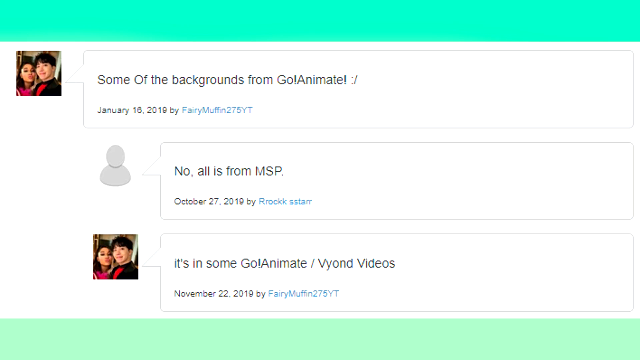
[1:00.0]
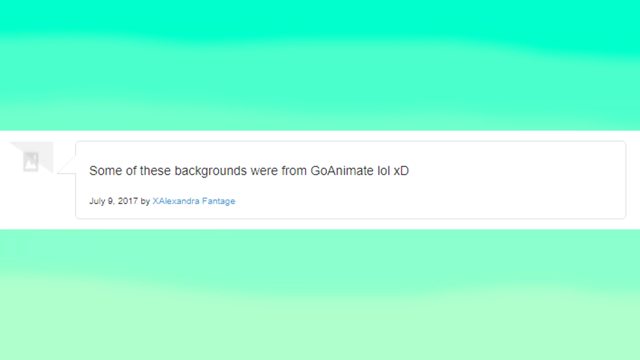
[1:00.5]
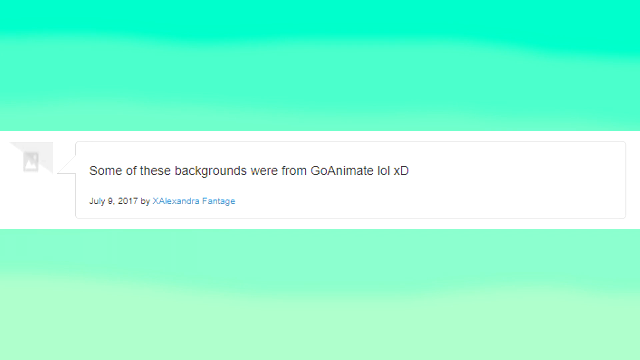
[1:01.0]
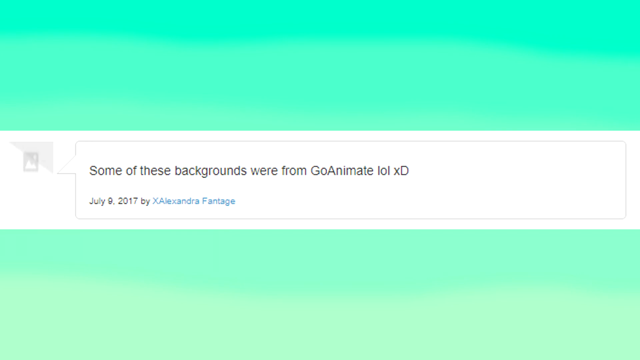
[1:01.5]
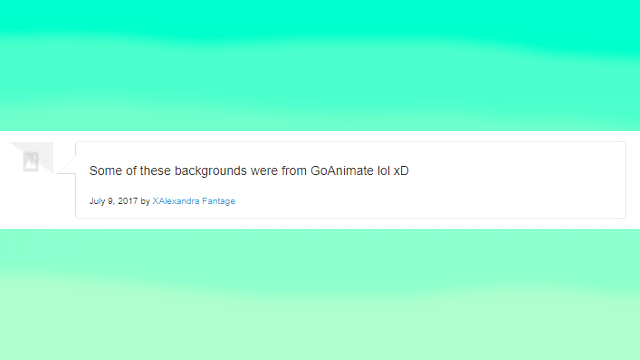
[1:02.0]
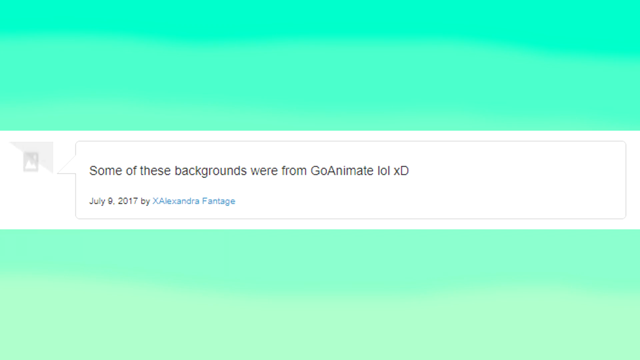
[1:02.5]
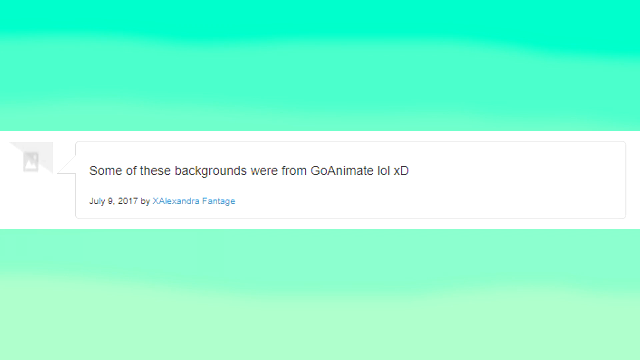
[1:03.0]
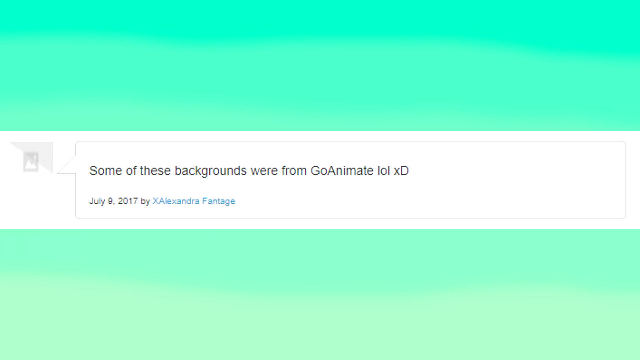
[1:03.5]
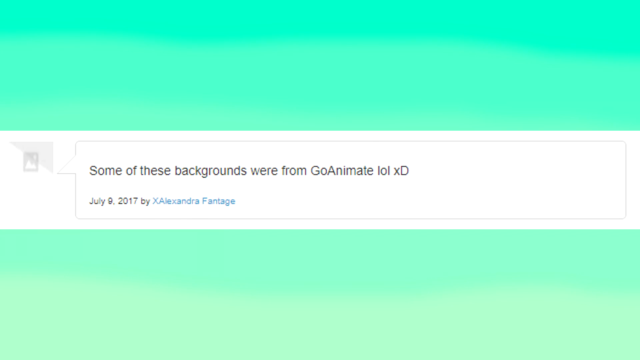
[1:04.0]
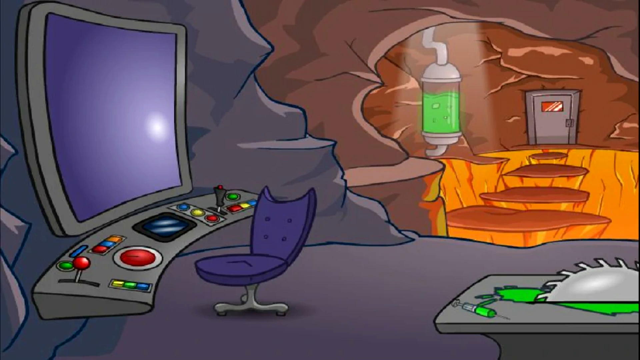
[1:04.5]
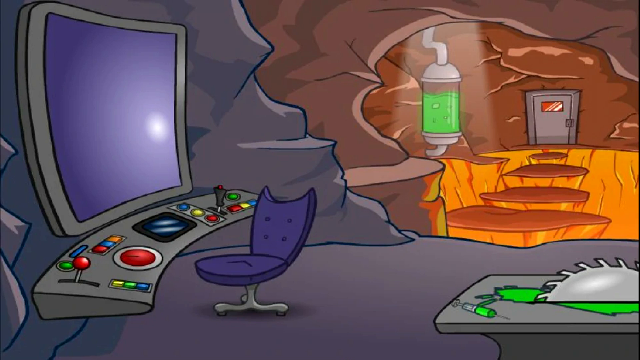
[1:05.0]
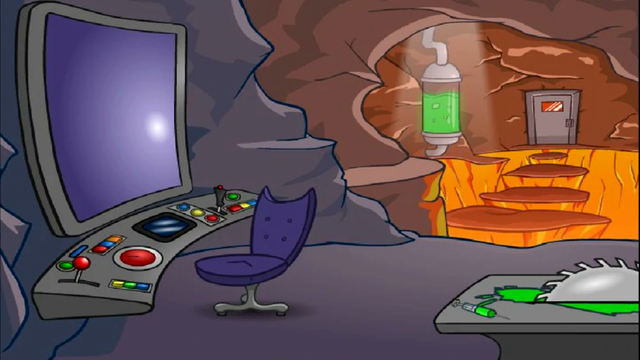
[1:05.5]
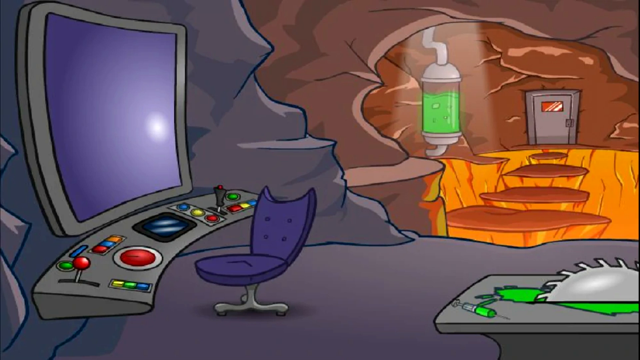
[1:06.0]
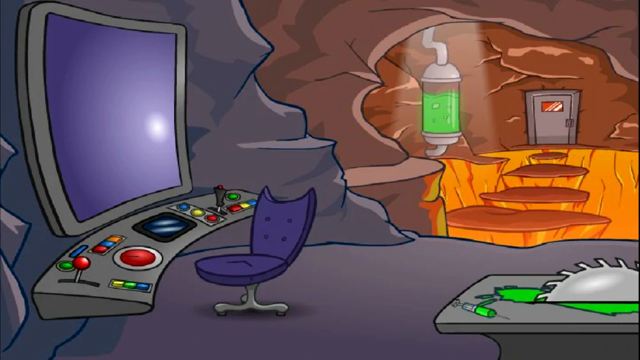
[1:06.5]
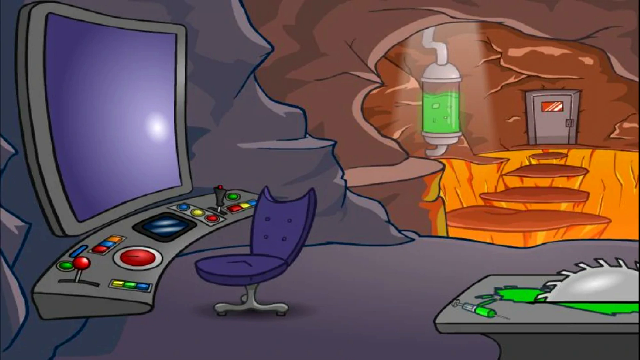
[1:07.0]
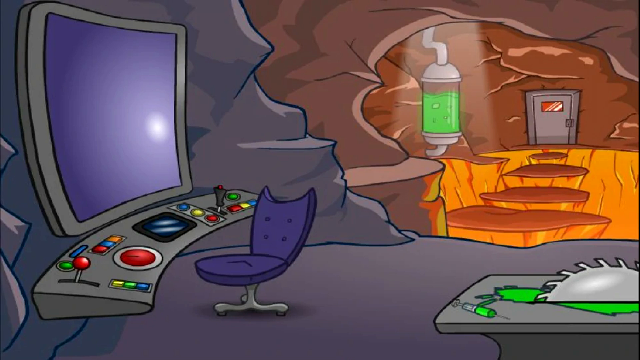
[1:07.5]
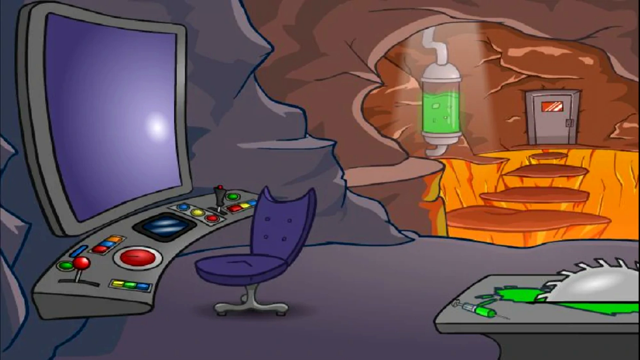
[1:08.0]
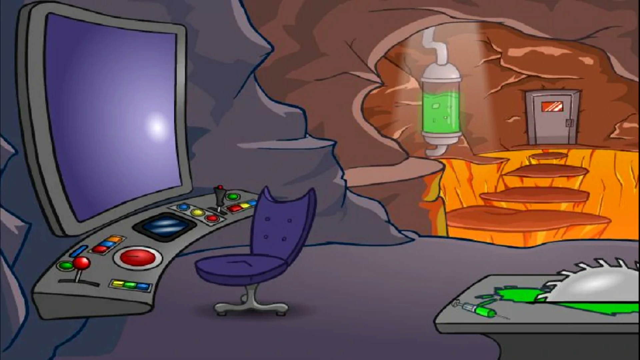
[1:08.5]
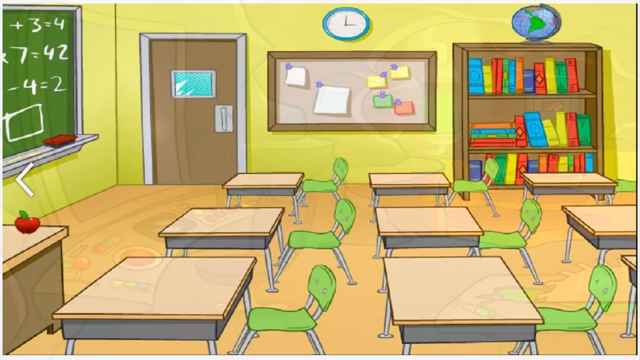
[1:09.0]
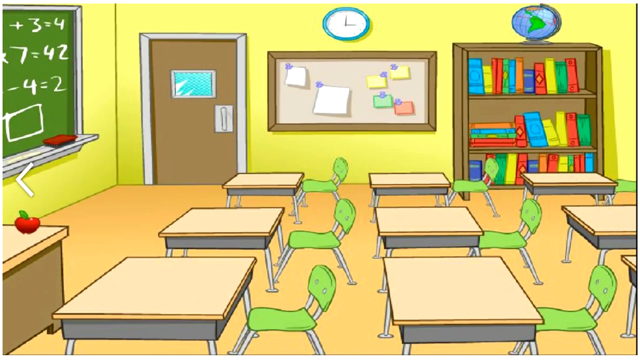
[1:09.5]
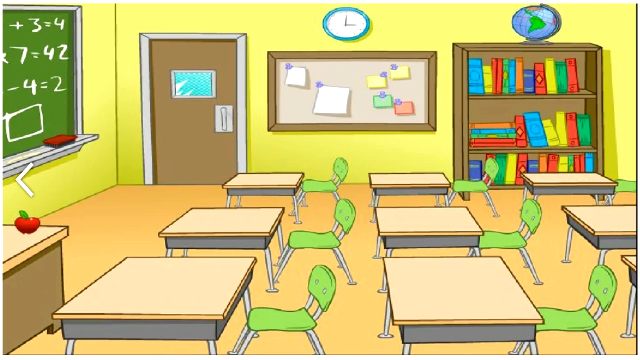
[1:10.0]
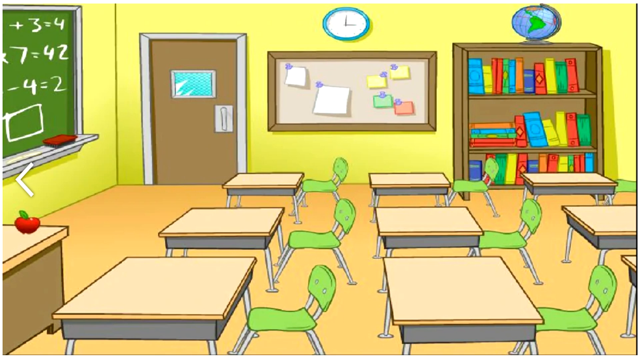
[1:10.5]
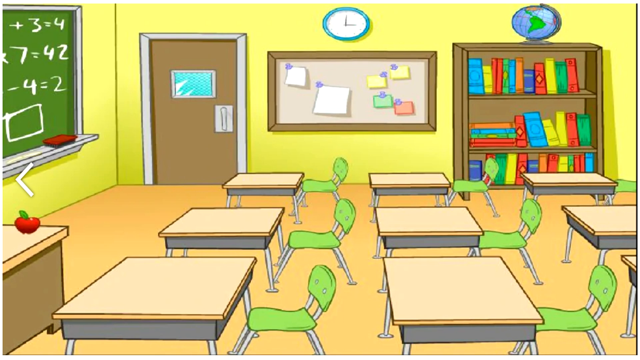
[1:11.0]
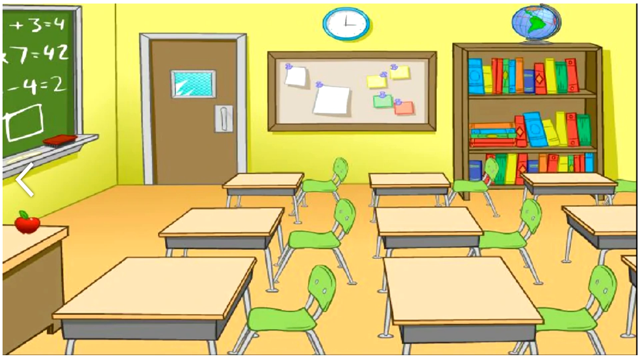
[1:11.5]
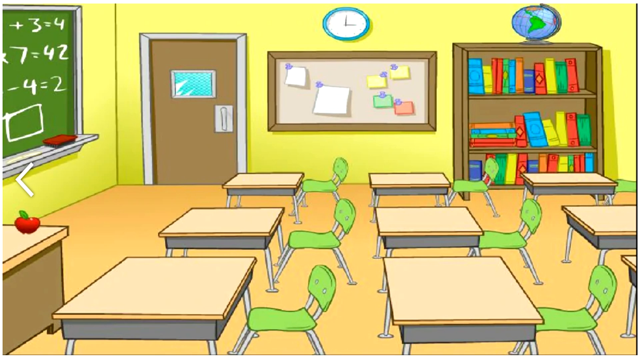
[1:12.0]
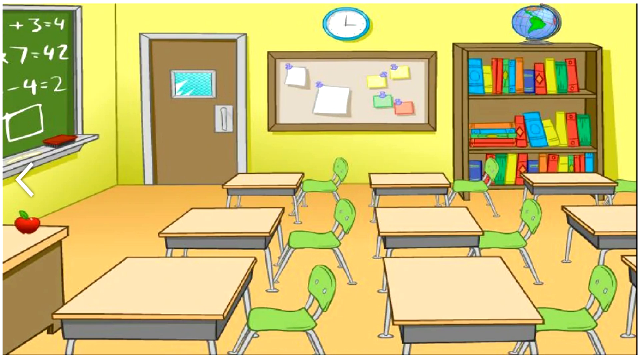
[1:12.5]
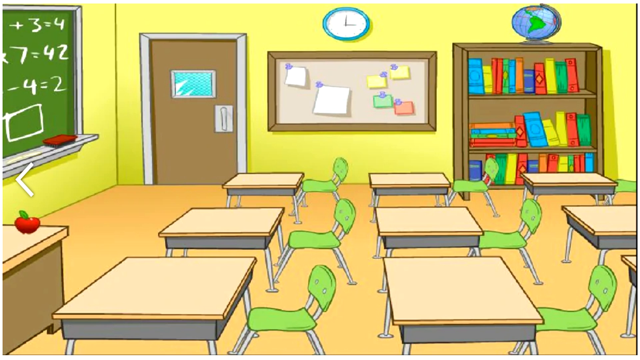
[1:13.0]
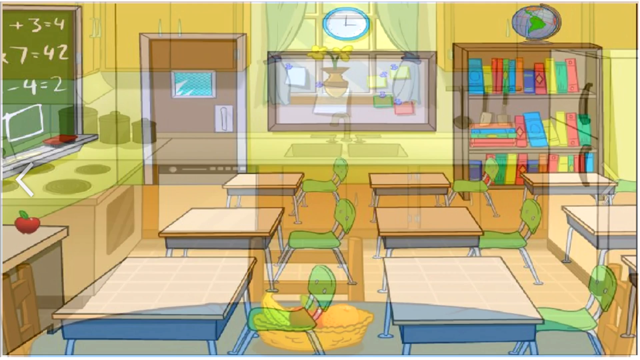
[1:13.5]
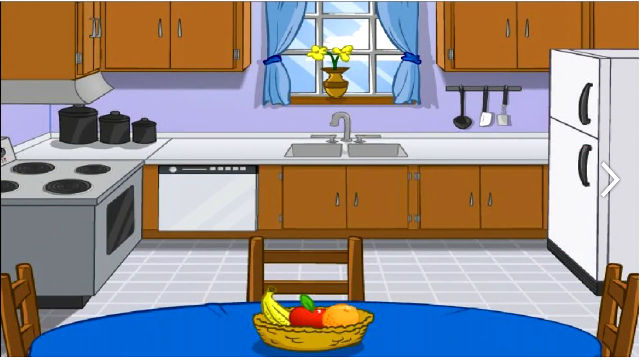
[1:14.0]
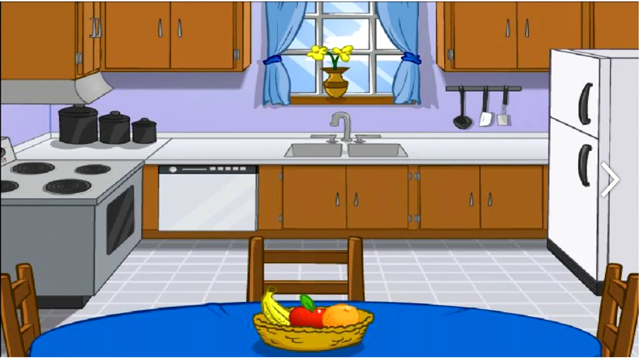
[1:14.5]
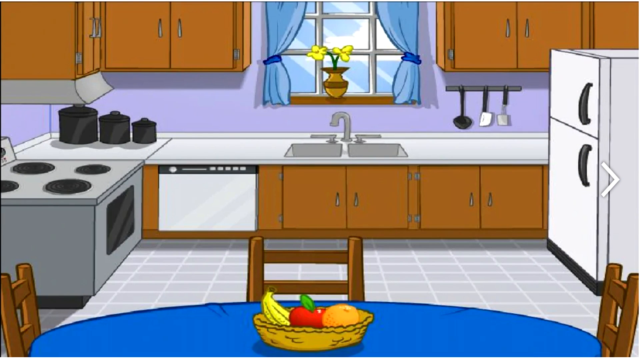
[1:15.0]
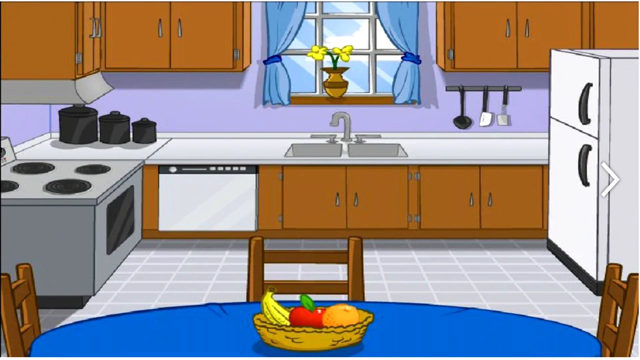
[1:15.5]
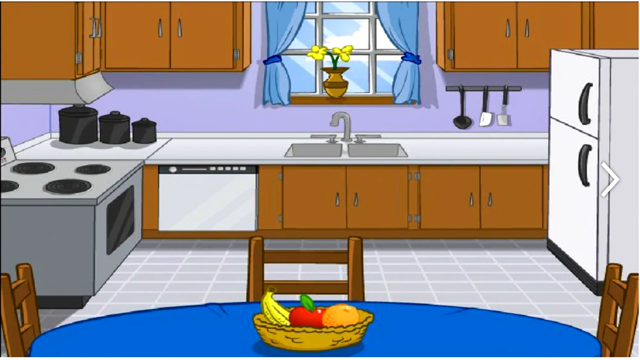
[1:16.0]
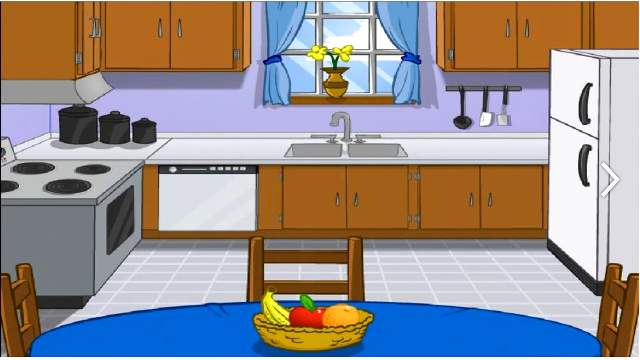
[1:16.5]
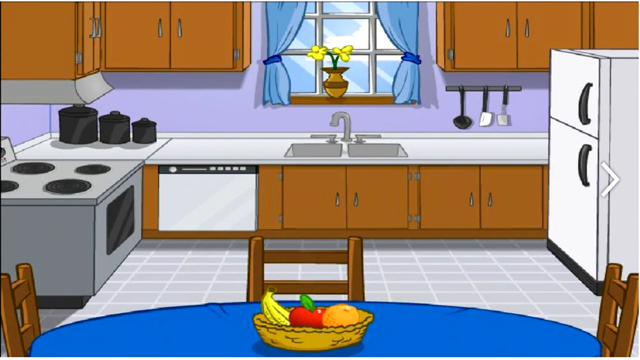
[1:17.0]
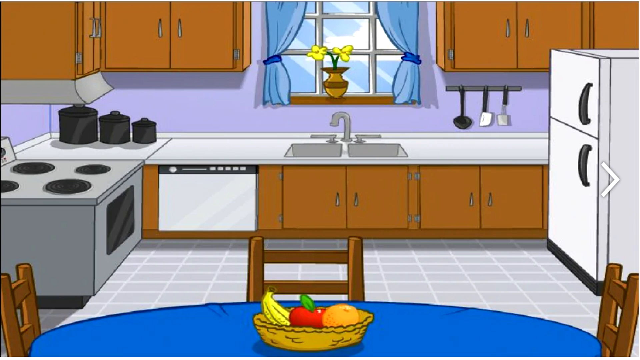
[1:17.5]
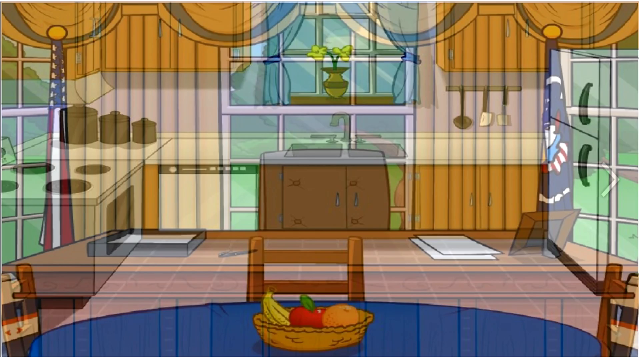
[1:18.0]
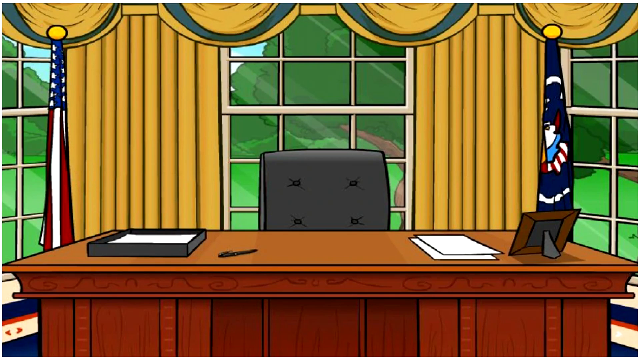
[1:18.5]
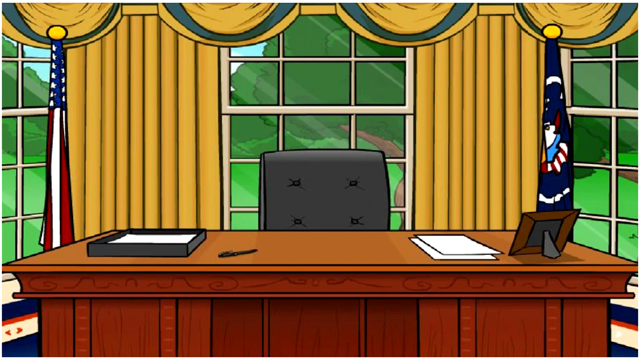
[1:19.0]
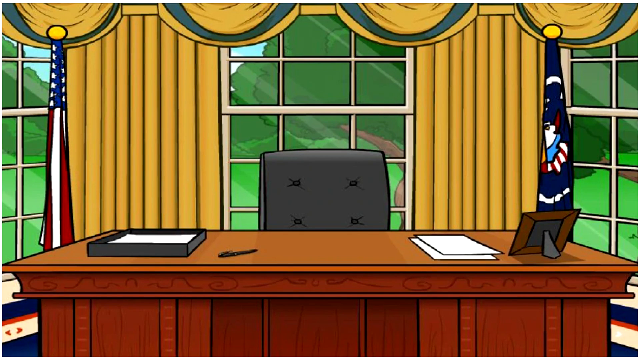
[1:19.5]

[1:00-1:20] Another comment appears on a white banner across the middle of the bright green background, with no profile picture. It says "some of these backgrounds were from go animate lol XD" and is dated July 9th 2017, by the username x alessandra fantage. The video cuts to an animated lair with a purple chair and a curved dashboard, as if for controlling something, and a big screen that is gray around the outside and purple in the middle. It looks like it is in some kind of cave, cabin or underground bunker-type place. On the floor behind the chair is a circular saw set into the floor, with lots of green liquid around it. Just behind that, to the right of the chair, is green liquid in something like a pipe and a see-through tube connected to some pipes. A door is set in the wall on the other side, and reaching it looks treacherous: there are brown circles that look like stepping spots, but it almost looks as if you would drop through to the floor. This is the evil lair from the backgrounds shown before. Next is the classroom, with bright yellow walls and a different yellow floor. It has nine desks, each with the same matching green chair, a door to the left, a pinboard straight ahead, and a bookcase next to it with a globe above it. There is a clock showing three o'clock, a green kind of chalkboard with a chalk rubber and some sums on it, and a red apple on a teacher's desk just visible on the left-hand side. Then comes the kitchen: a bowl of fruit on a table with a blue tablecloth, a chair, a big fridge to the right, the oven to the left and the sink straight ahead. There is a window with blue curtains and some yellow flowers, and a utensil rack on the wall holding three utensils such as scoops and slices. On the worktop at the left are three sort of canisters that look like they might be for biscuits, tea and coffee. The units are brown with silver handles, the floor is a grey kind of lino with a tile effect, and there might be a built-in dishwasher. The video then cuts to the Oval Office.